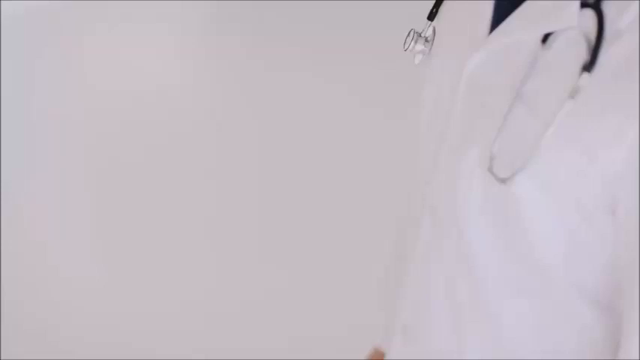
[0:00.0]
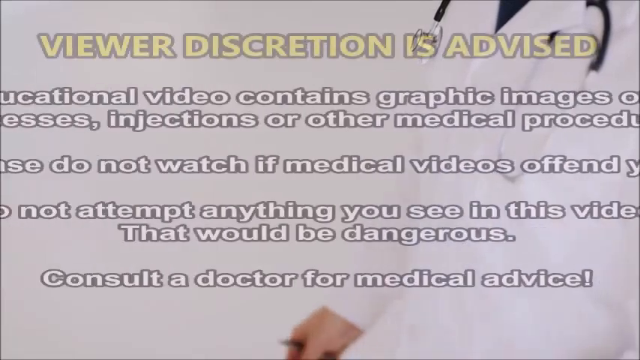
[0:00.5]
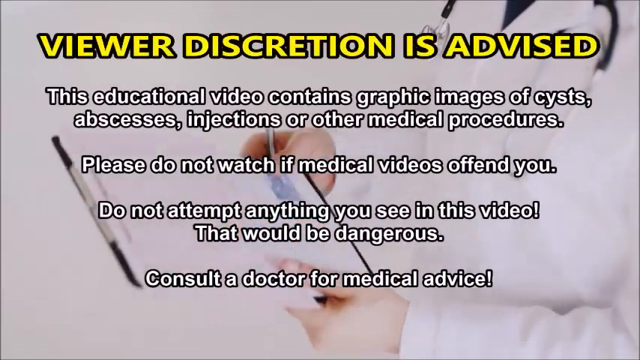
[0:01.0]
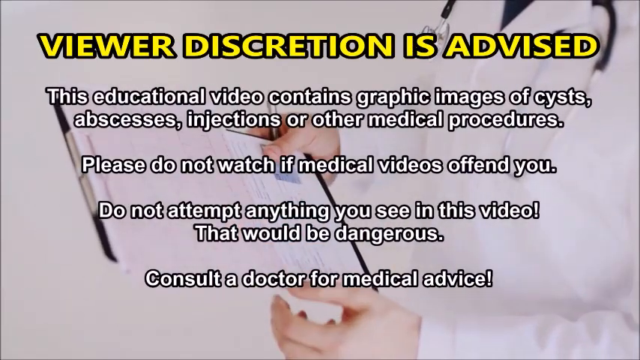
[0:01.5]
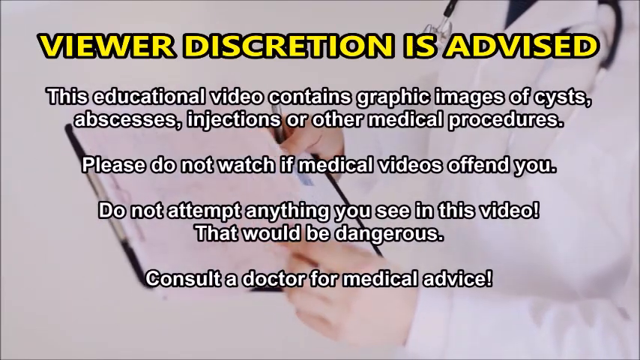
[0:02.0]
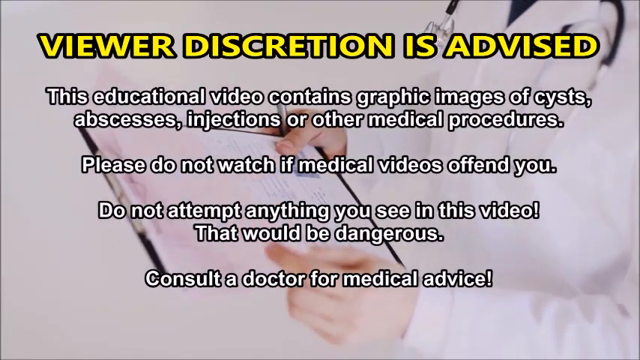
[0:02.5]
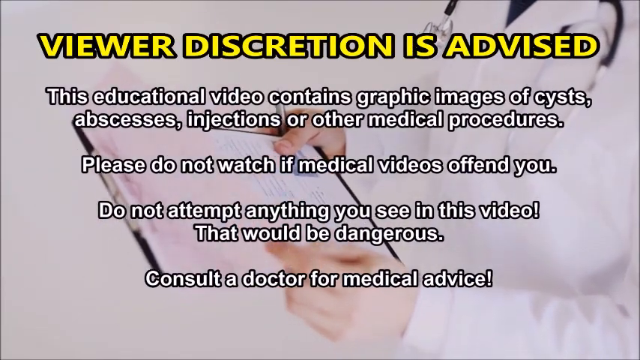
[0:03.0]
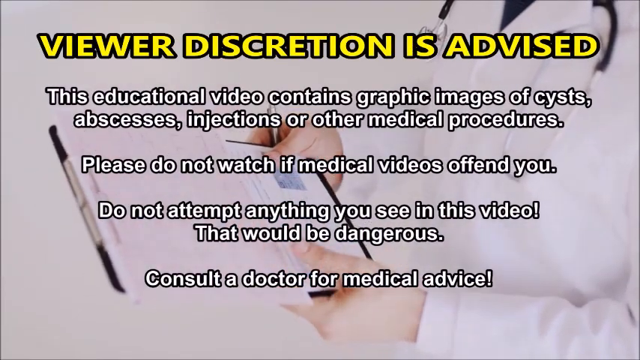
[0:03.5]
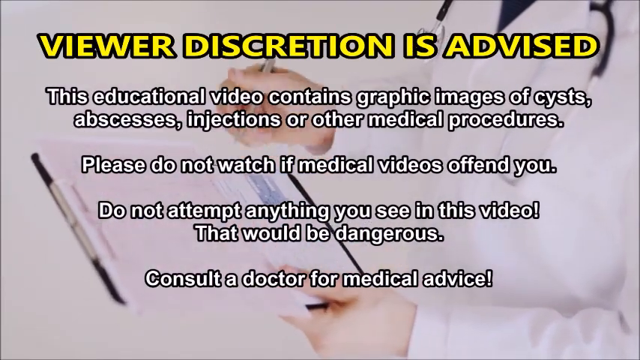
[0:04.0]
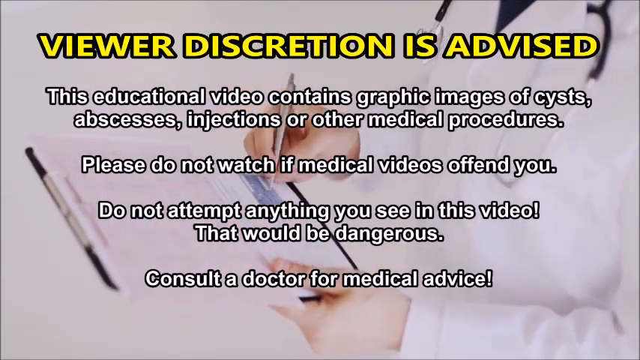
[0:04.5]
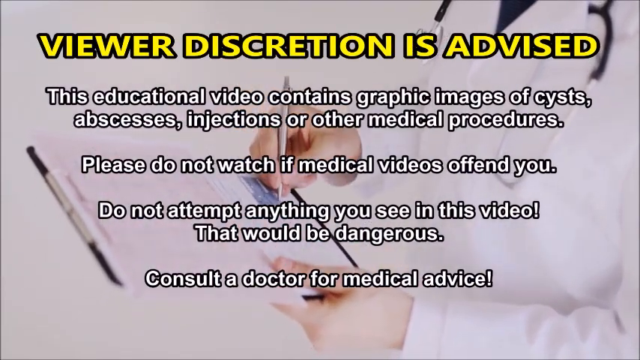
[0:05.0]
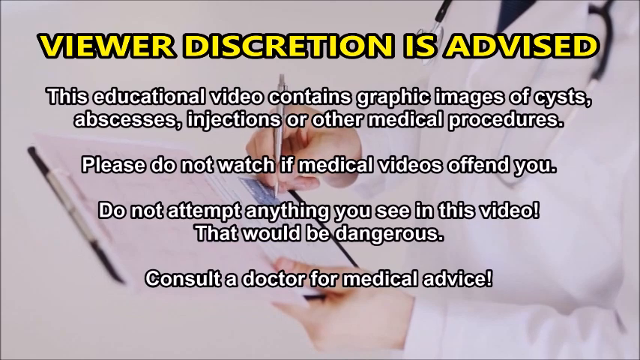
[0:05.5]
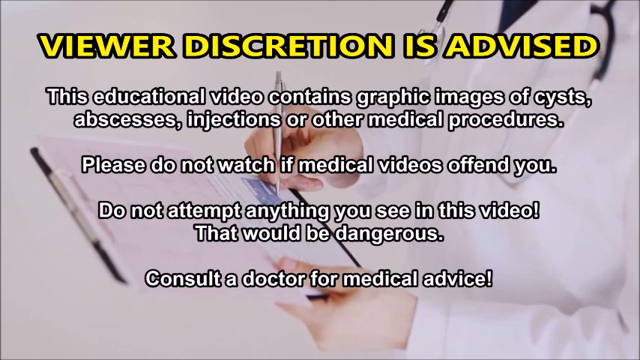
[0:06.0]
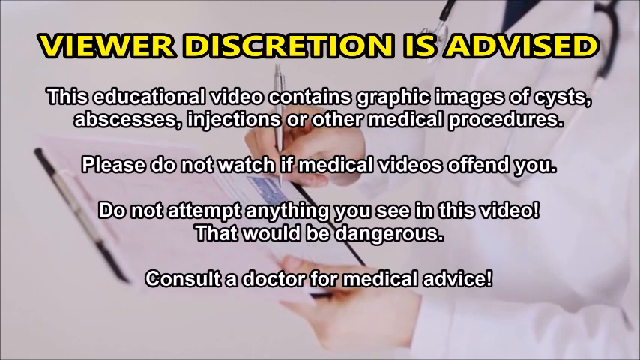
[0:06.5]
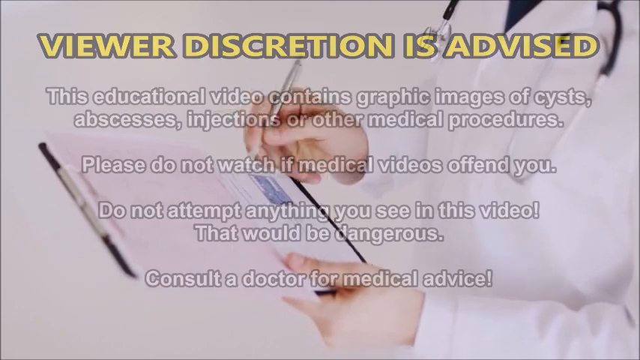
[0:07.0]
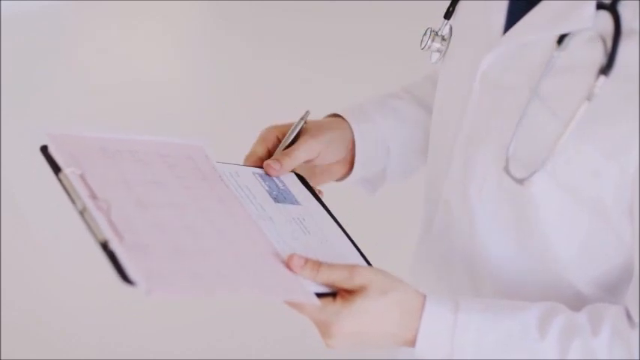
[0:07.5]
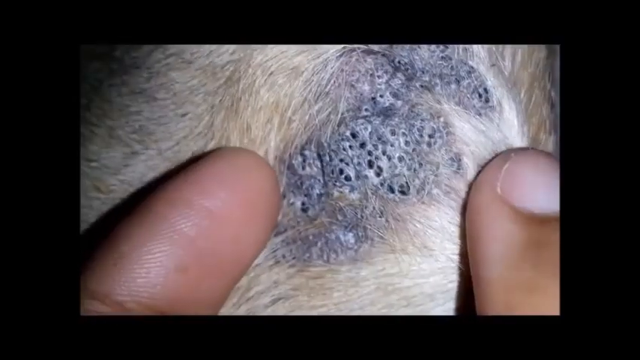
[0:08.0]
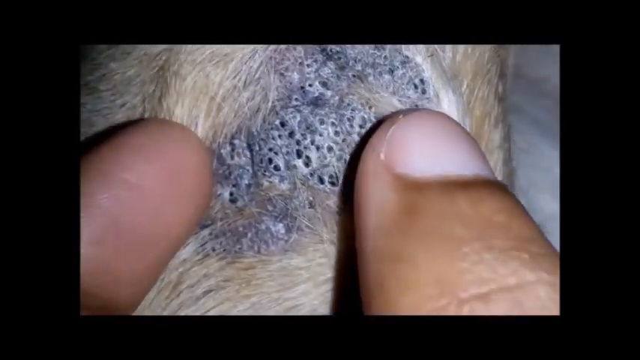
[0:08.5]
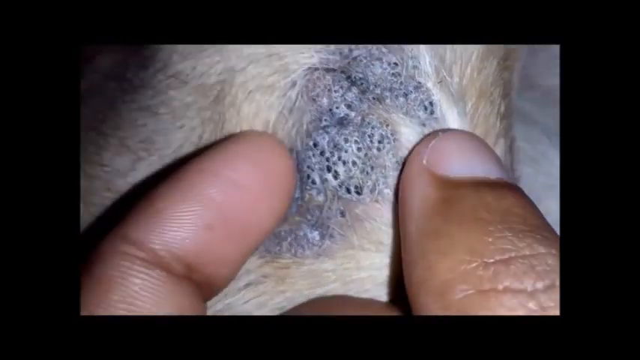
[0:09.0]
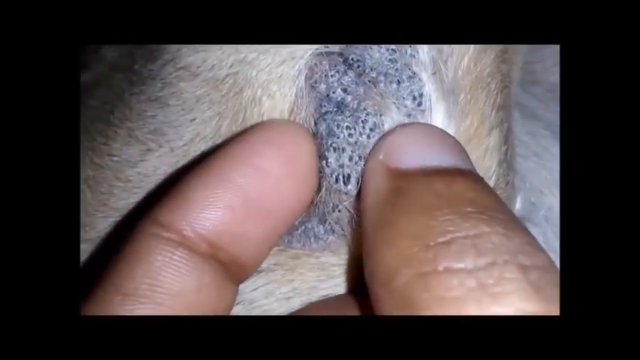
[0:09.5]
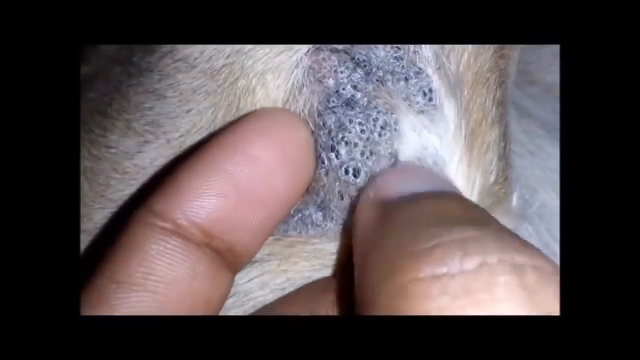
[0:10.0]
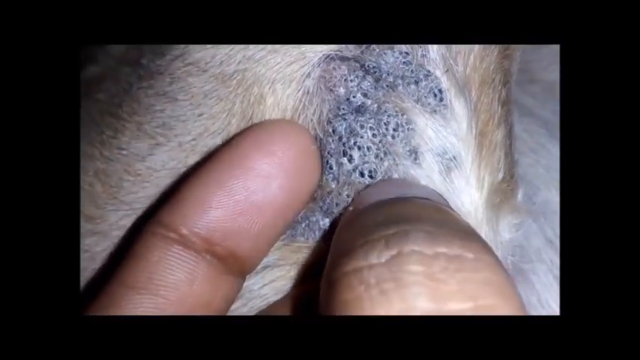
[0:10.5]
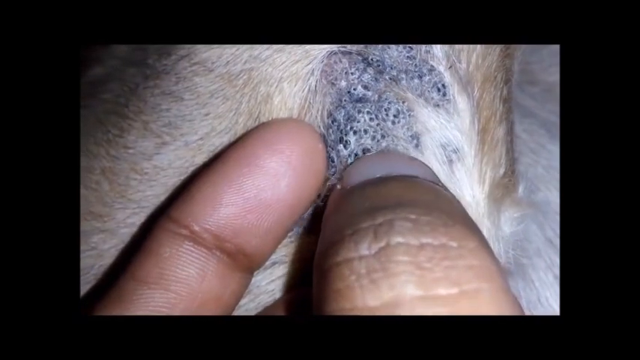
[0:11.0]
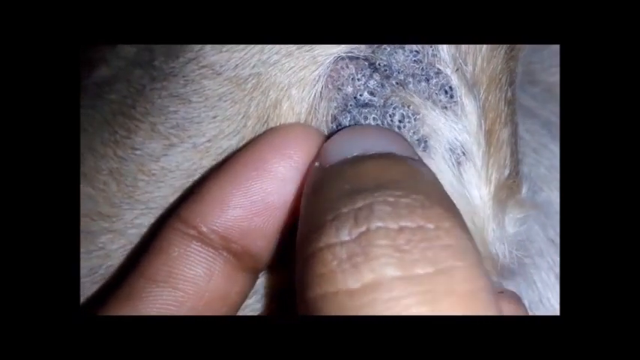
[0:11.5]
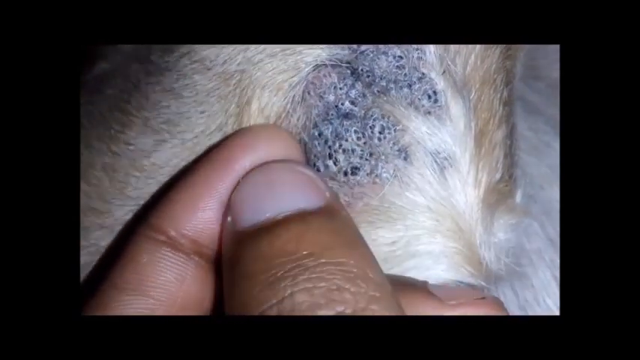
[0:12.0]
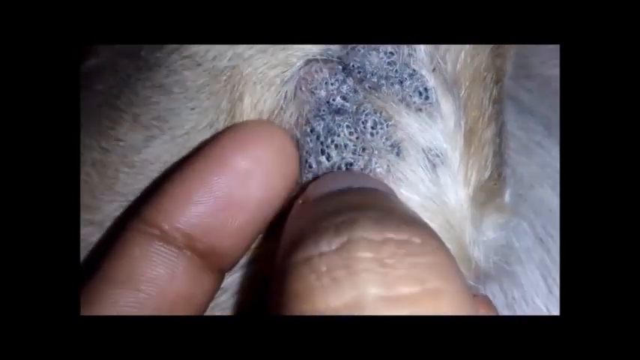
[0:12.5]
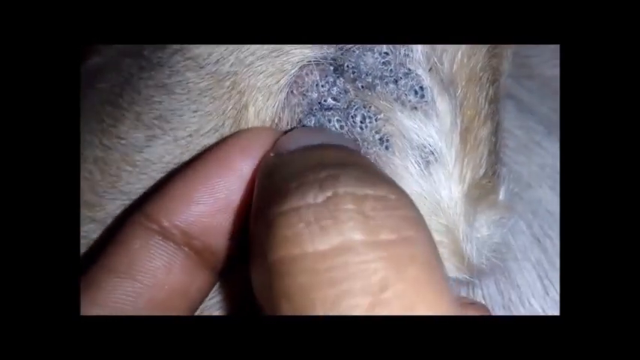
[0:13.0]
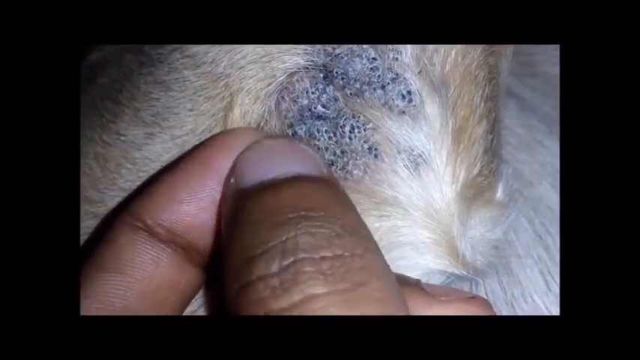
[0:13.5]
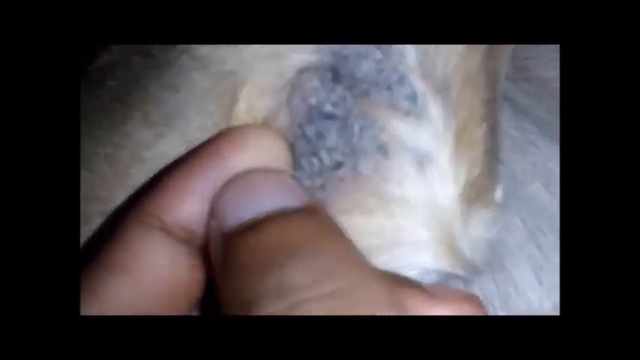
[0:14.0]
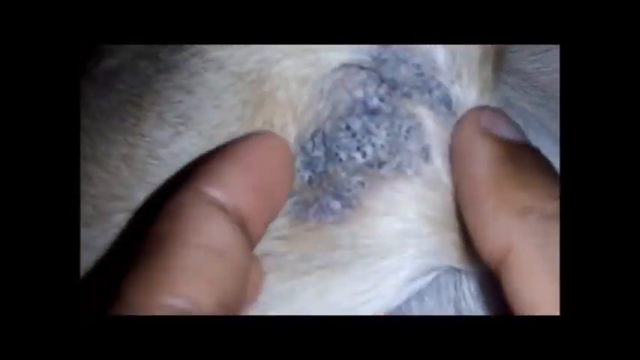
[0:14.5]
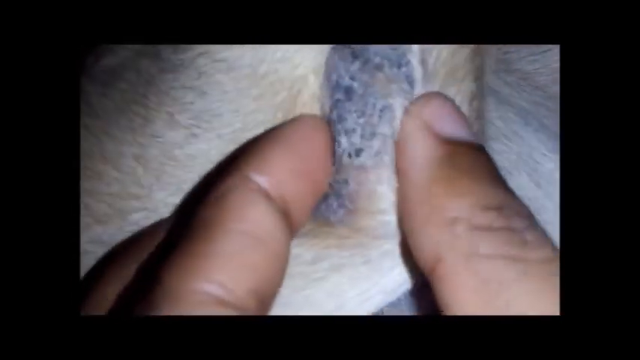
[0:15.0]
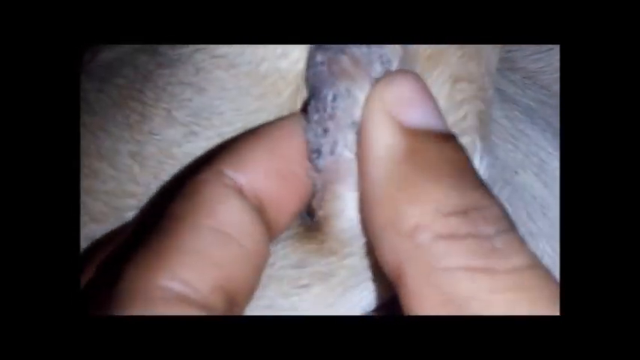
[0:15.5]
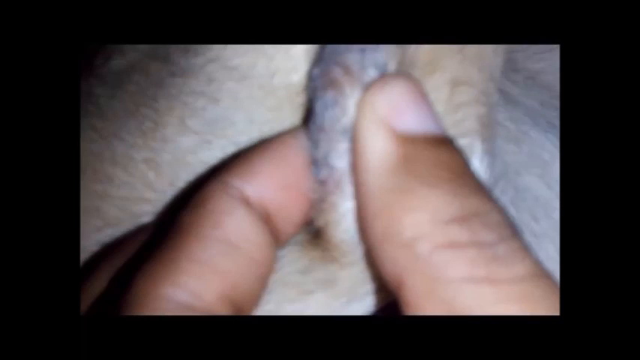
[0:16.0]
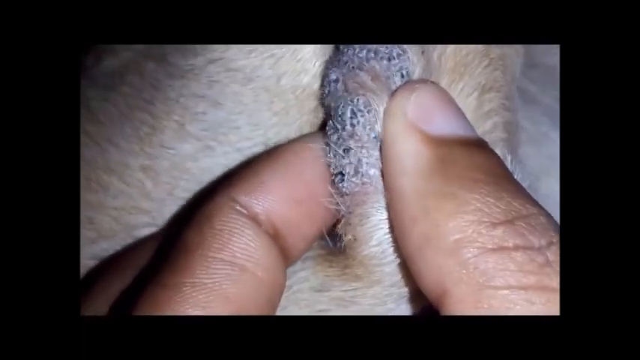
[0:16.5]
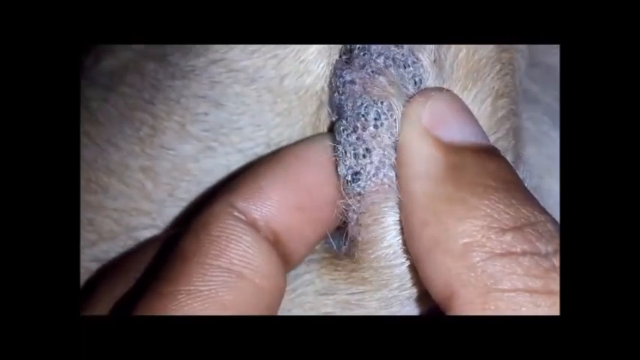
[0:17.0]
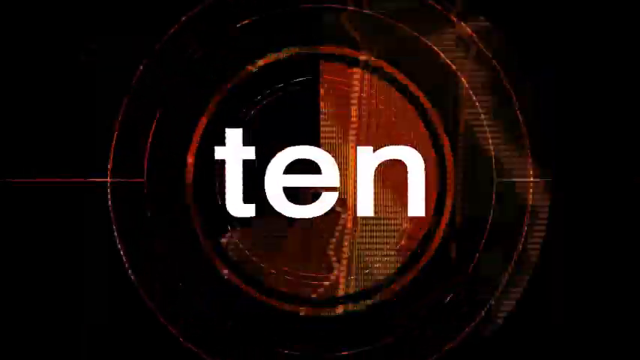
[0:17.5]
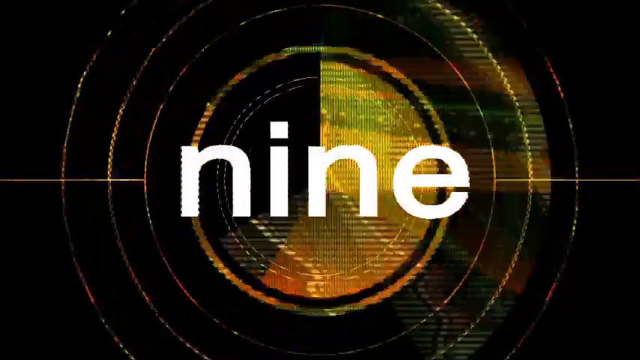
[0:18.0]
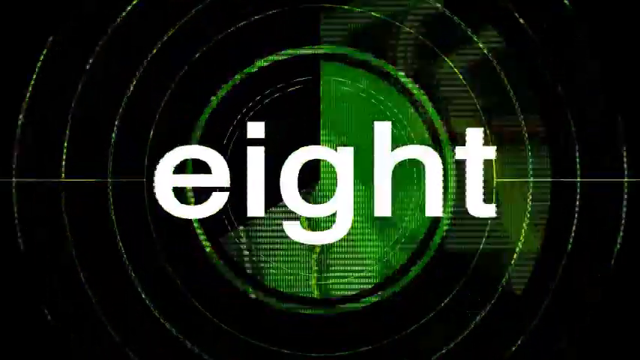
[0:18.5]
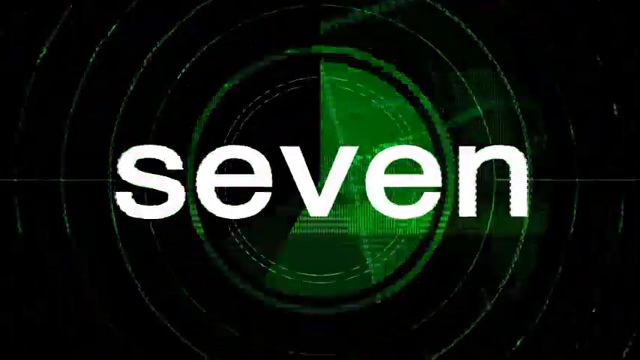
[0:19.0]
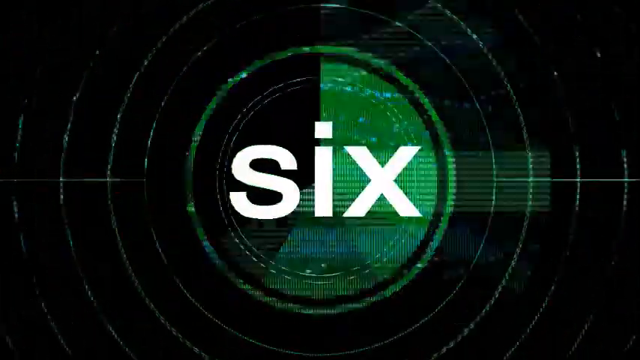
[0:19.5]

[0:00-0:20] The video opens with a discretion warning on a grey background, with a body shot of a doctor in a white coat and a stethoscope in the background. The title reads "viewer discretion is advised", followed by the text "This educational video contains graphic images of cysts, abscesses, injections or other medical procedures. Please do not watch if medical videos offend you. Do not attempt anything you see in this video. That would be dangerous. Consult a doctor for medical advice." Behind the text, the doctor lifts up a clipboard; he has a pen in his pocket. Holding the clipboard, he flips over the page of notes and then flips it back. He takes his pen in his right hand and makes a note in the bottom blue box. Next comes a close-up of an animal with cream fur. The vet is looking at a lump on the animal's skin that is grey with little black bumps. He takes the lump between his finger and thumb and squeezes quite hard, showing its lumpy texture, then squeezes it again, revealing bumps with black dots on the surface of the skin. A graphic then appears: a circle with dotted rings and the number 10 in the centre, with another circle behind it in red. The number changes to 9, 8, 7, 6 and 5.